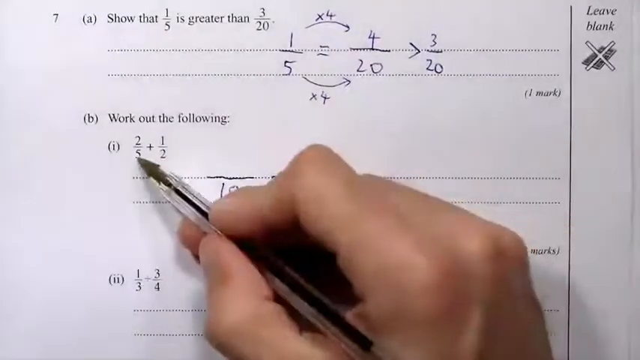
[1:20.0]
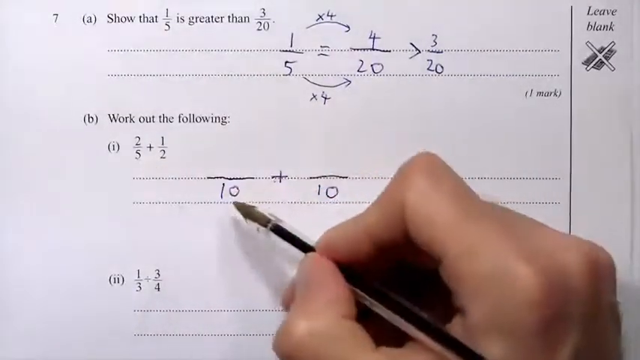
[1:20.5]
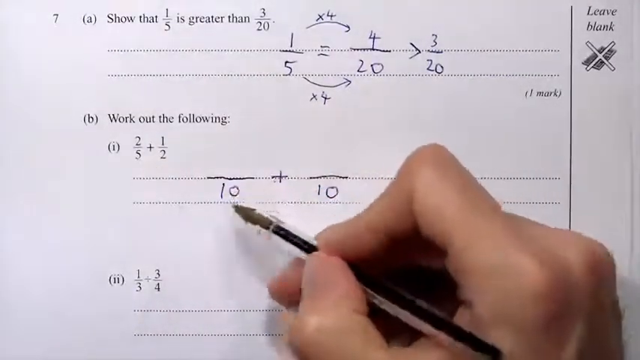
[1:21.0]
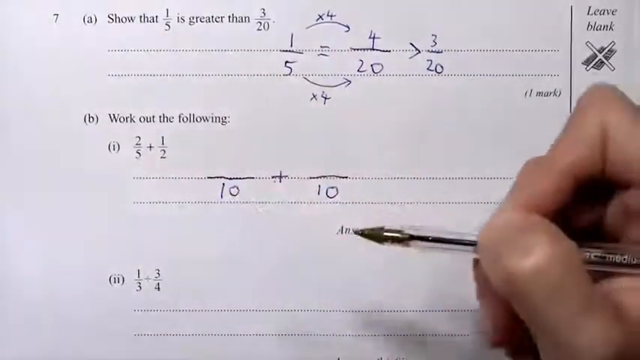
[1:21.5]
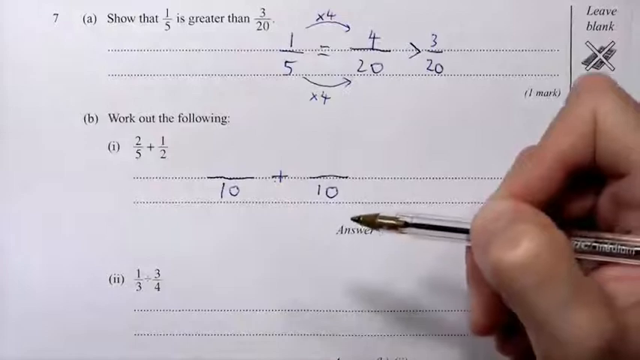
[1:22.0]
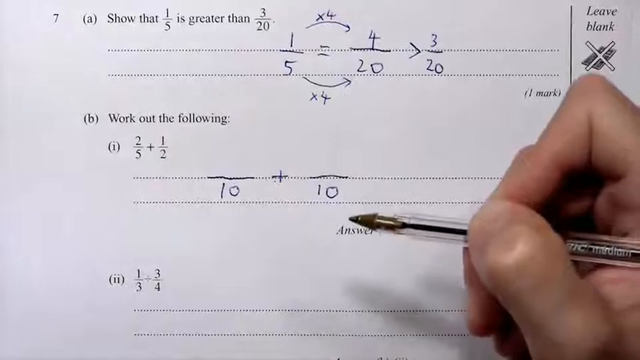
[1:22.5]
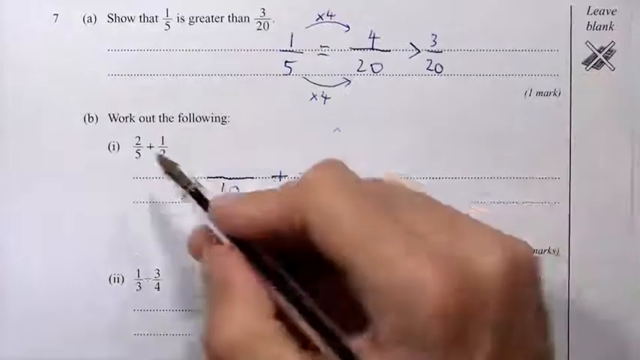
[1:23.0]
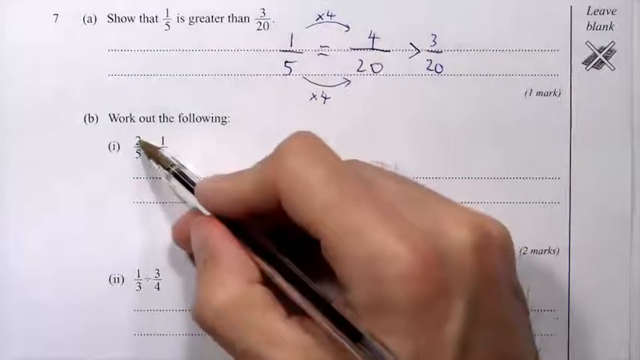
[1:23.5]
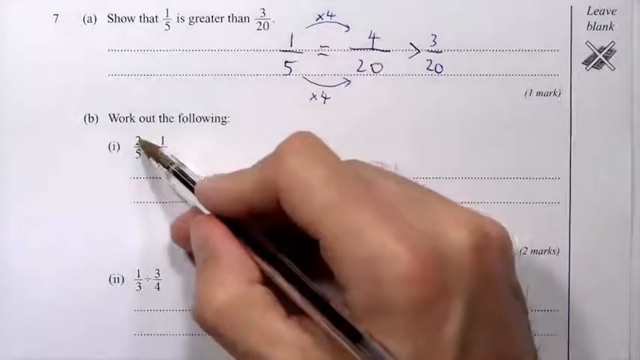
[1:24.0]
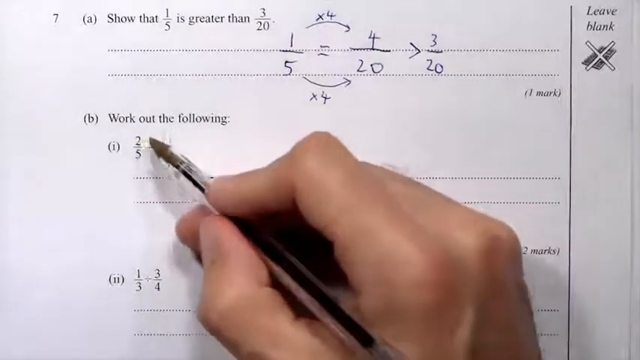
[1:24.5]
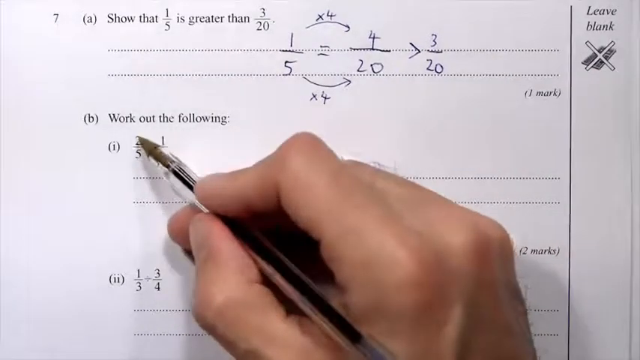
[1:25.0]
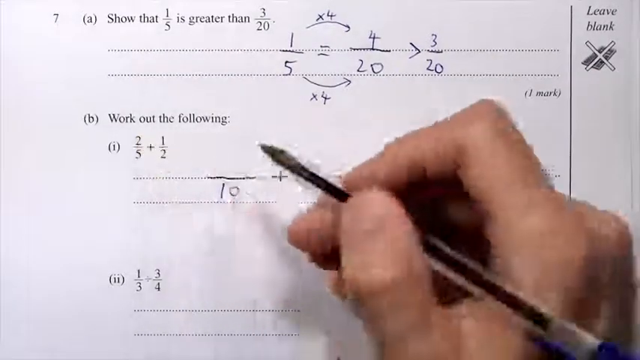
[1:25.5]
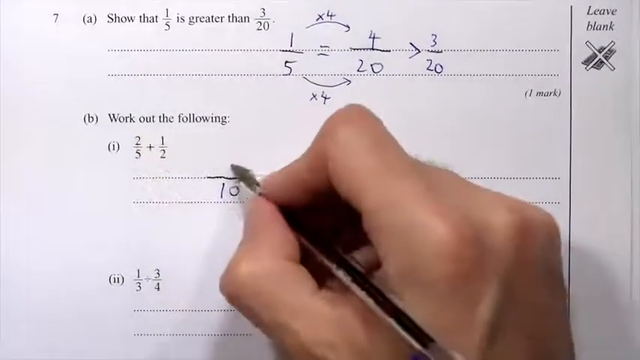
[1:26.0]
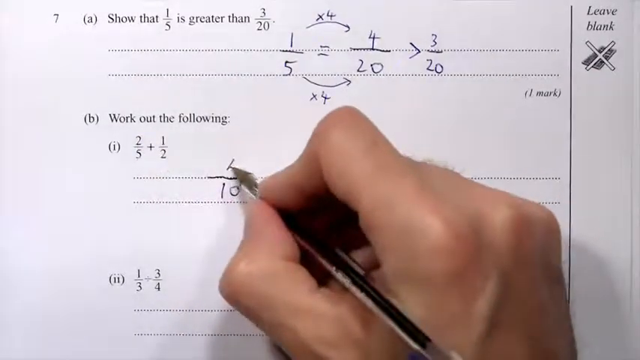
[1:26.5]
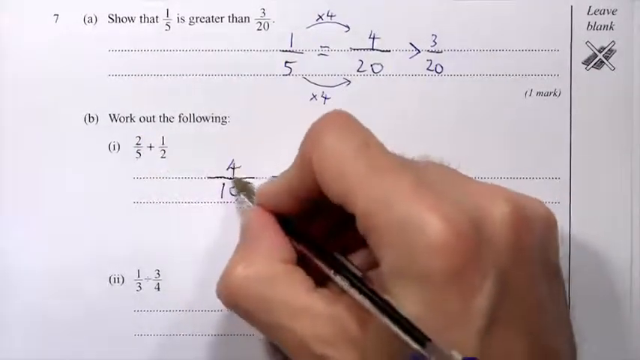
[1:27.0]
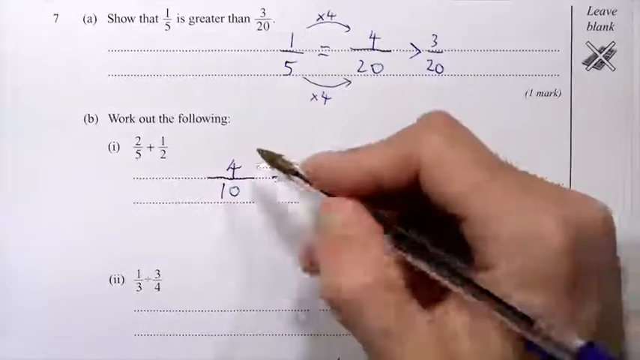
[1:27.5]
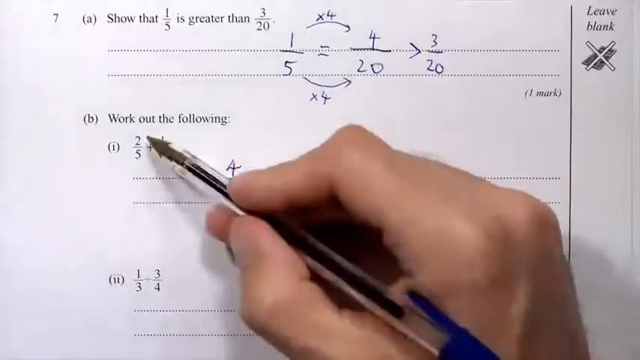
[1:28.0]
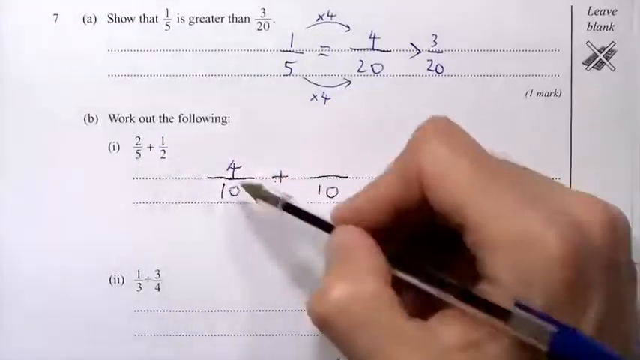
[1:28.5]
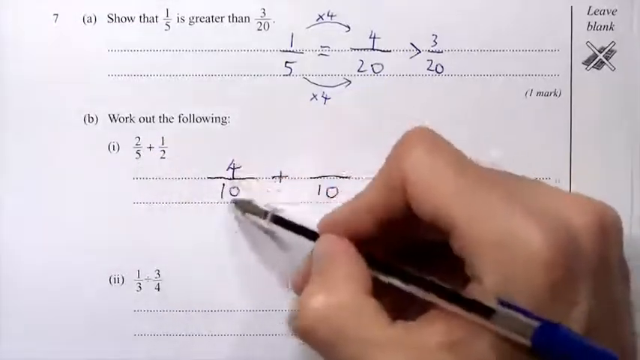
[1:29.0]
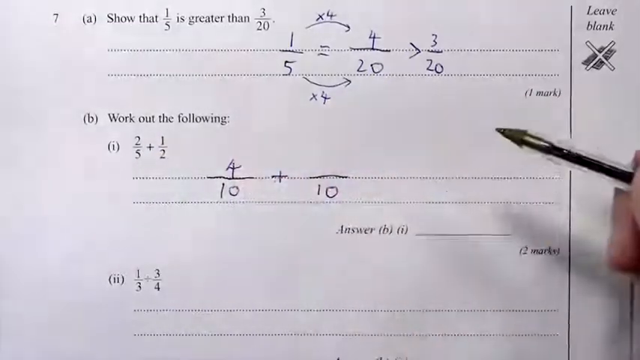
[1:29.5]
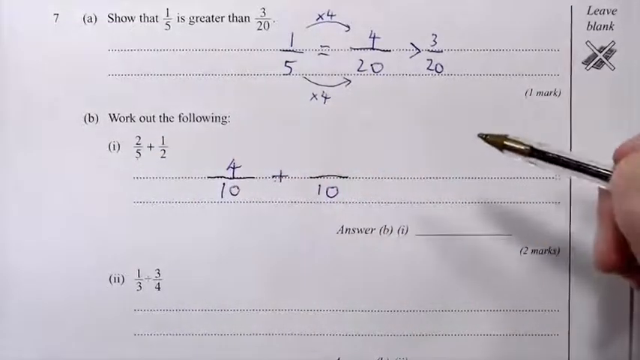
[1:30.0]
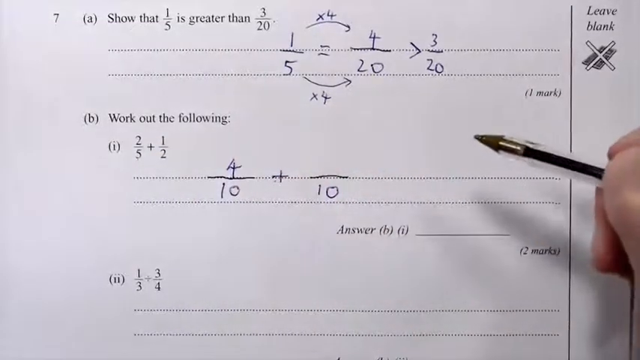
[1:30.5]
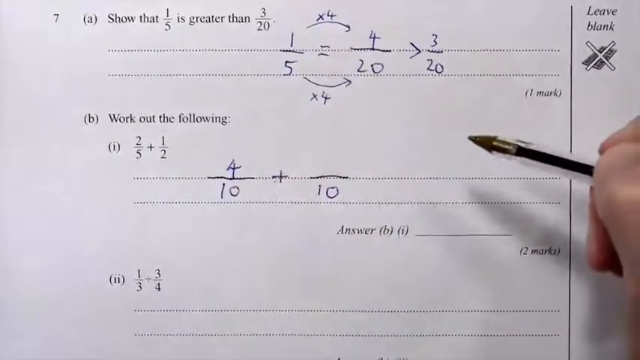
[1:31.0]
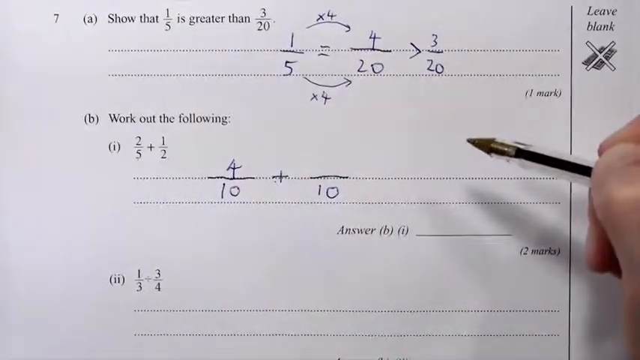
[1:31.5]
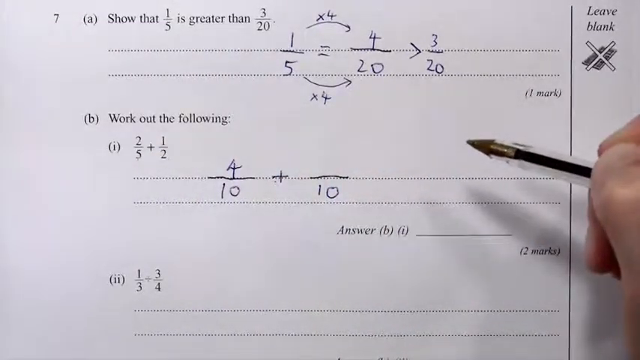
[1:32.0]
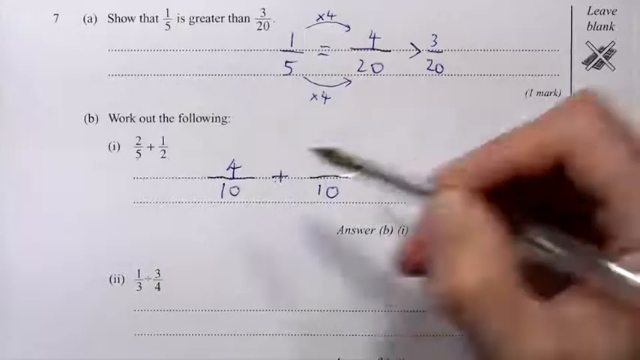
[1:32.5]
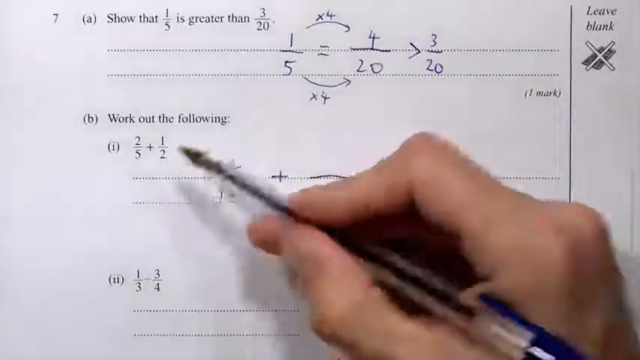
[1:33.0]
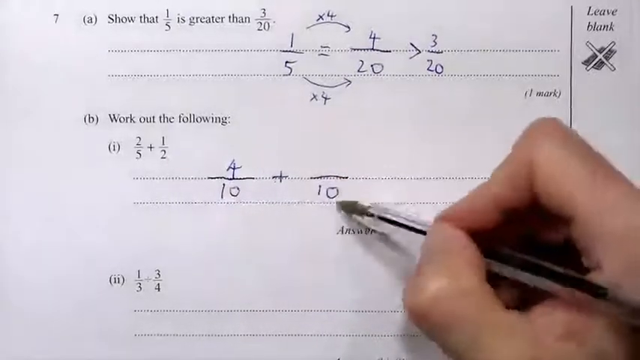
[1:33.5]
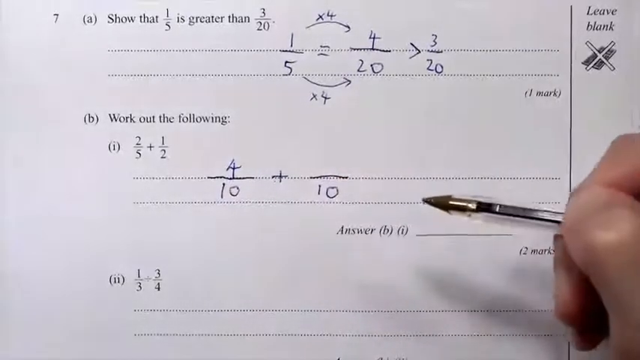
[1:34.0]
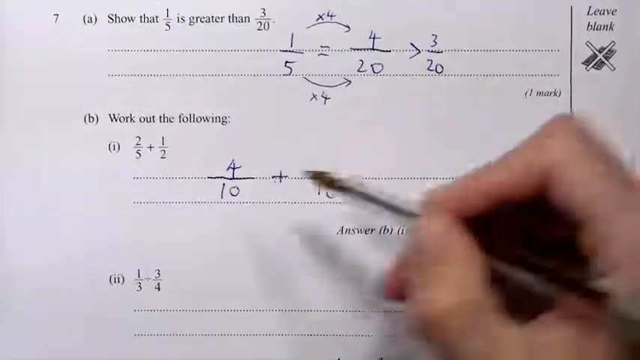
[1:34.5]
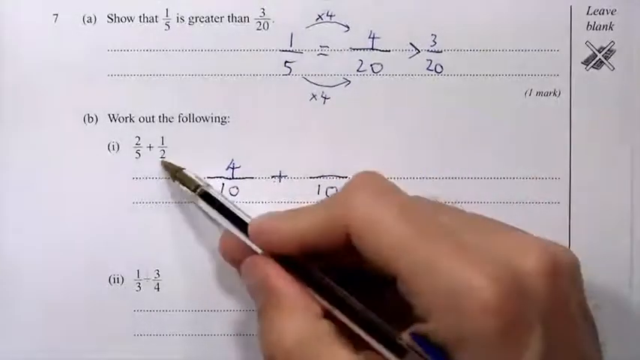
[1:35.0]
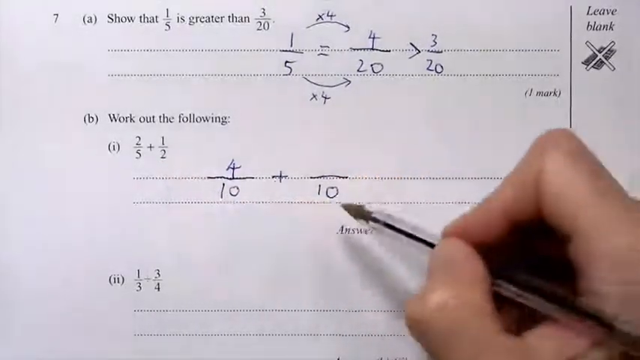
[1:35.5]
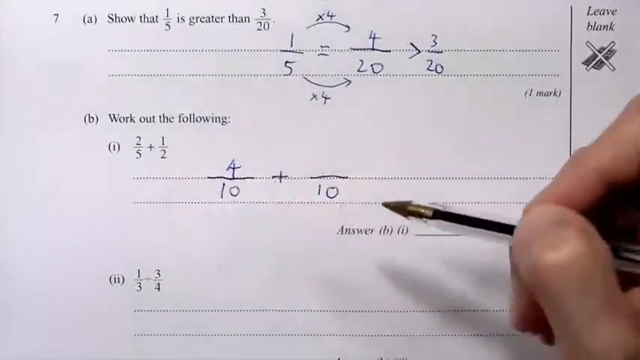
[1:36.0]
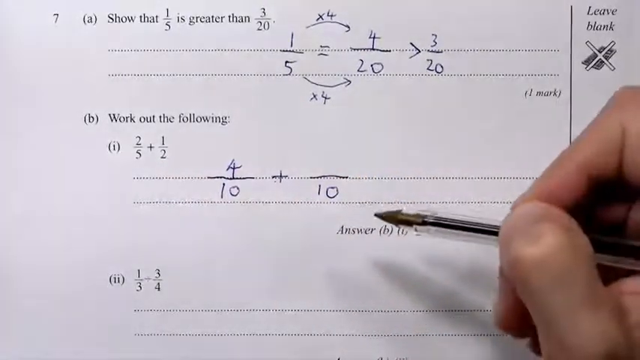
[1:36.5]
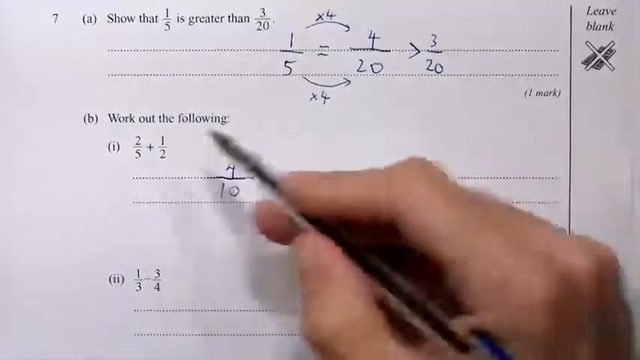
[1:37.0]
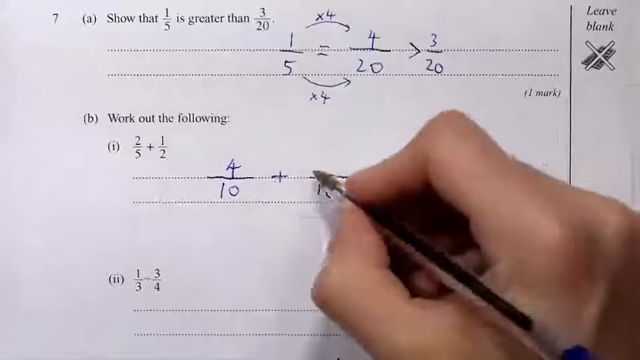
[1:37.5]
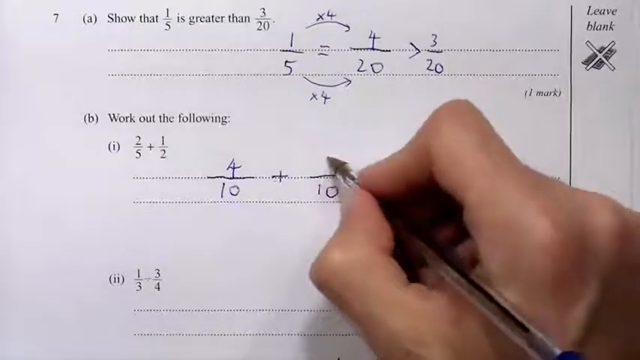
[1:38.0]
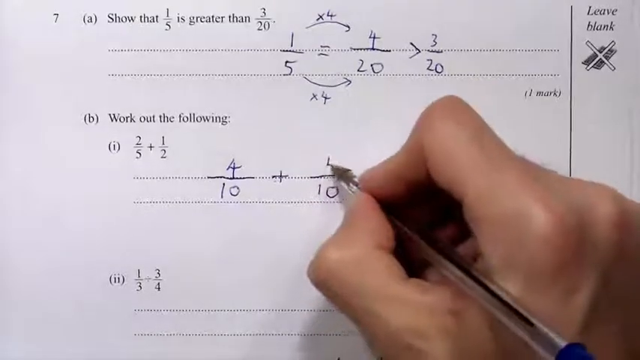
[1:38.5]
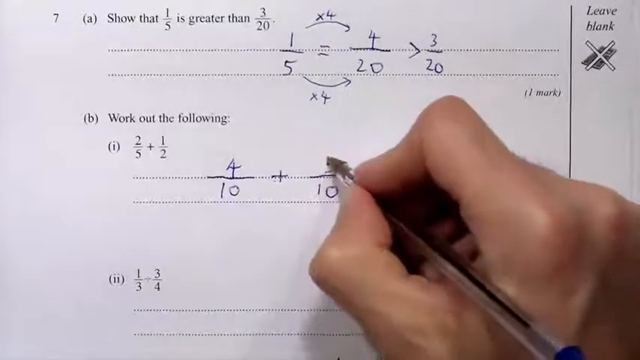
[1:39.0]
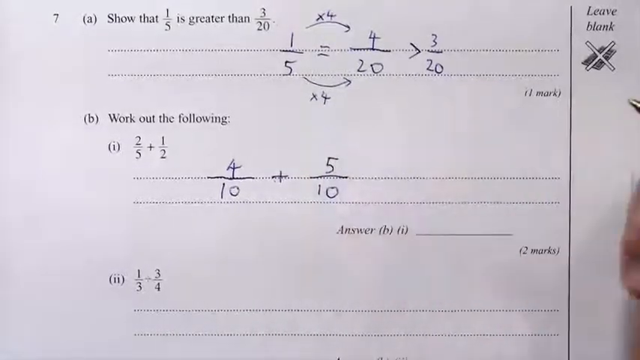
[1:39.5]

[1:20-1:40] With 10 as the lowest common denominator, the numerators are worked out: 2 times 2 gives 4, and 5 times 1 gives 5. So 2/5 becomes 4/10 and 1/2 becomes 5/10.